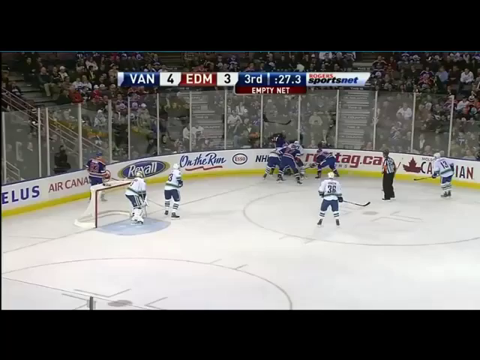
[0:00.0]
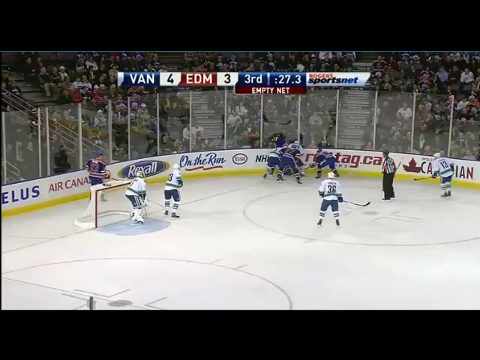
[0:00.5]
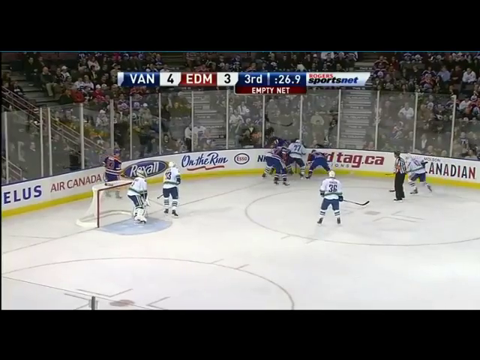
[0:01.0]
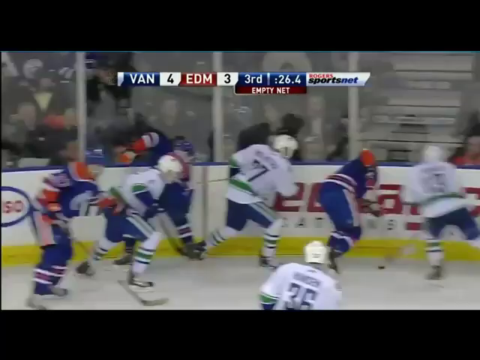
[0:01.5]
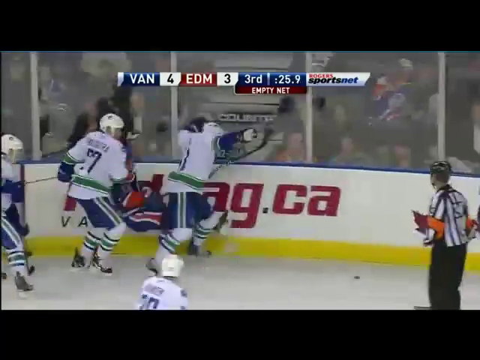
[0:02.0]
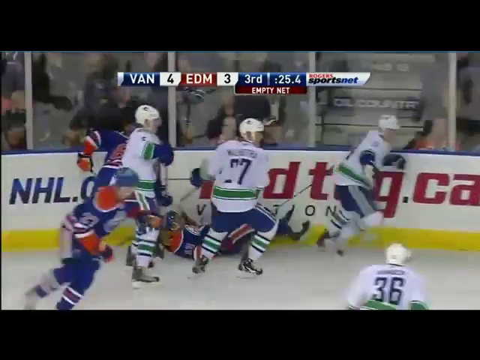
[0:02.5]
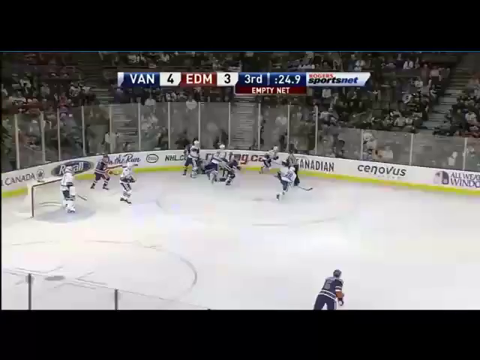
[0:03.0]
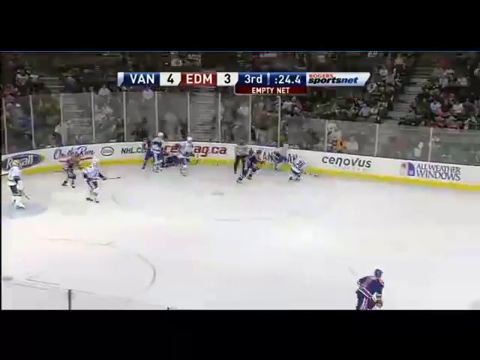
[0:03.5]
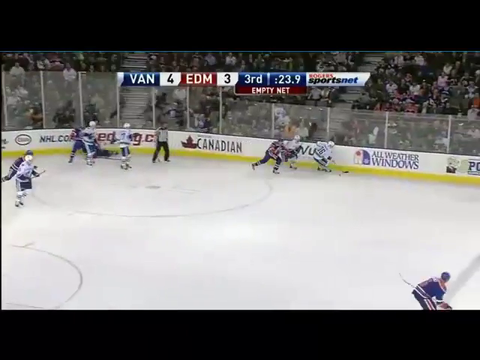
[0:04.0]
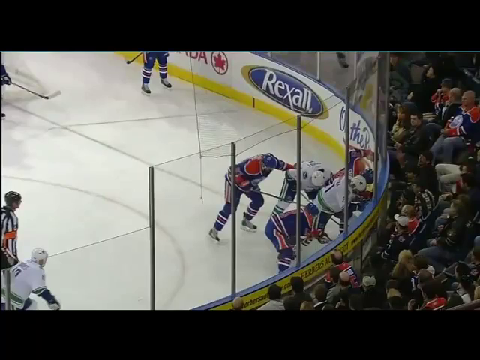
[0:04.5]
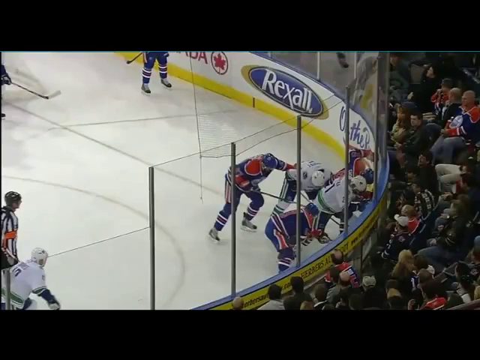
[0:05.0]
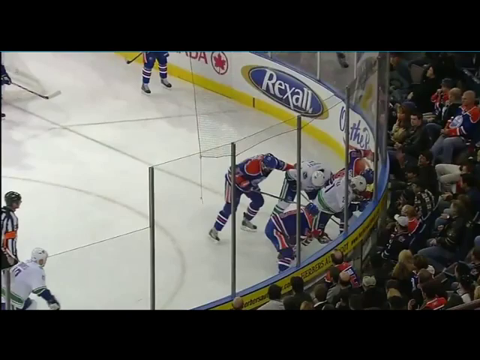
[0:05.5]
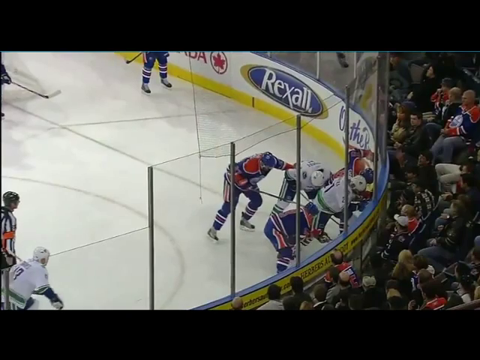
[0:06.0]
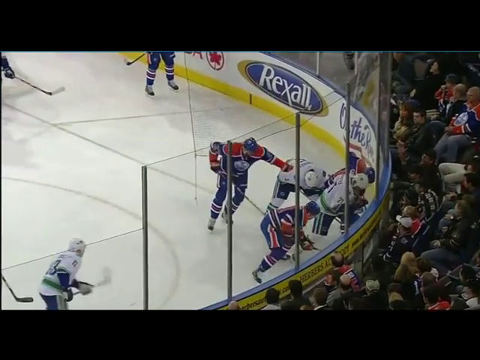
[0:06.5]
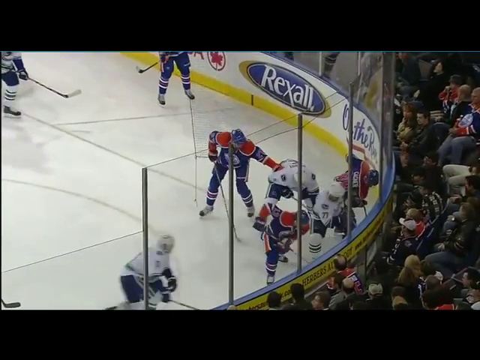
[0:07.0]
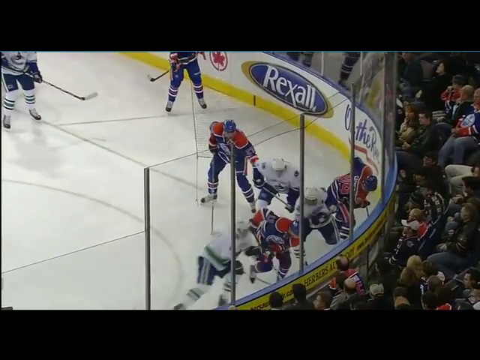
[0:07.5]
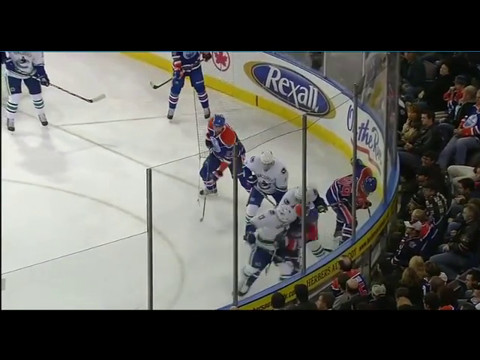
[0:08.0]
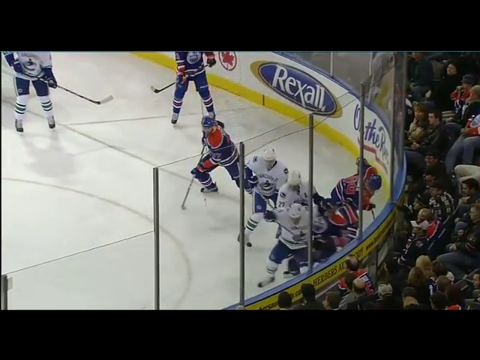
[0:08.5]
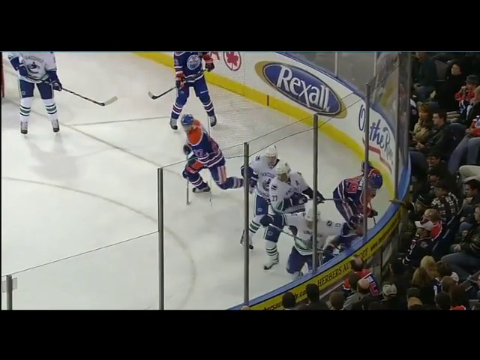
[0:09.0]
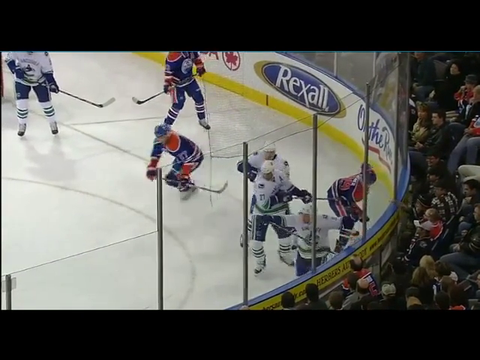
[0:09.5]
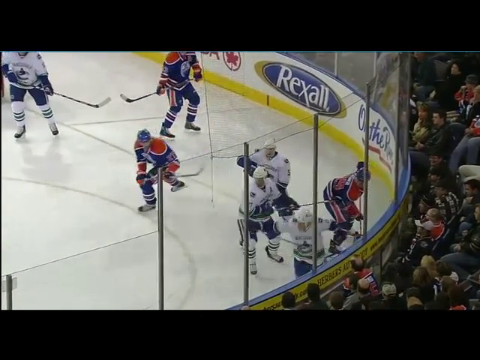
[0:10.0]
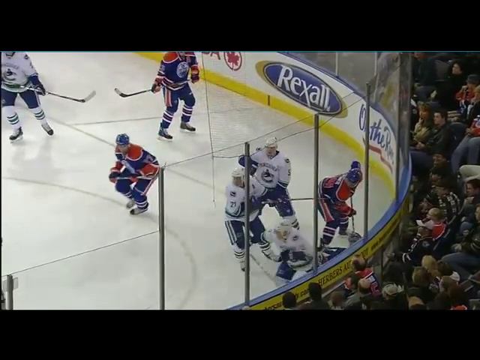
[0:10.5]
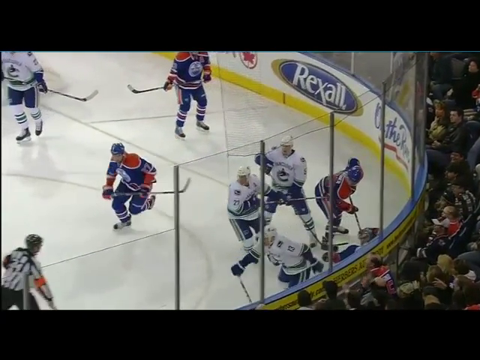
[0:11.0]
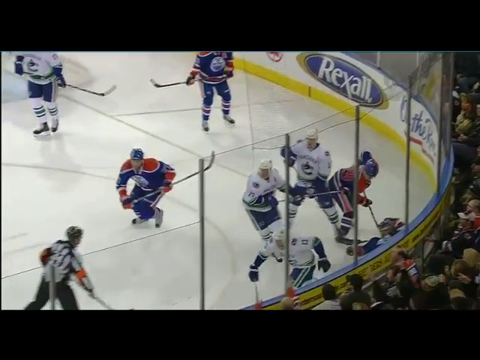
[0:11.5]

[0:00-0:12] A hockey game is underway, with players on the rink who look like they are putting their hands on each other. There is a white team and a blue team, and the view shows only one section of the rink, where the players skate and slam into the plexiglass. A Rexall sign is visible, along with Air Canada; these are sponsors. The scoreboard up top shows one team as "V.A.N.", probably standing for Vancouver, with a score of four against "E.D.M." with three. It shows the game is in the third part, with 27.3 seconds to go, and it says "empty net". It also shows sports net, probably another sponsor. One player looks like he is checking his body into another. Many fans outside the rink watch the game intently, and the game is pretty crowded. The plexiglass is built very high, which protects the fans.